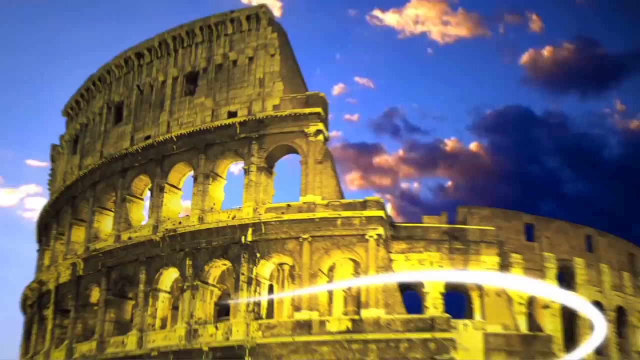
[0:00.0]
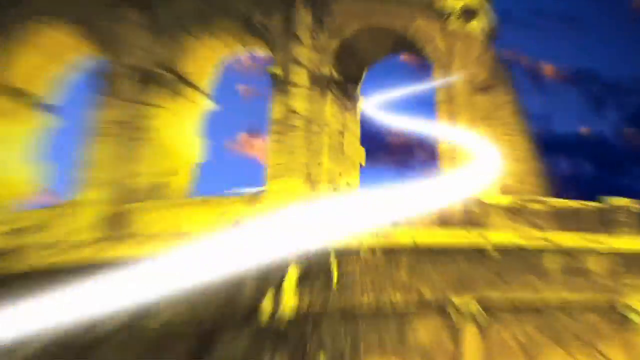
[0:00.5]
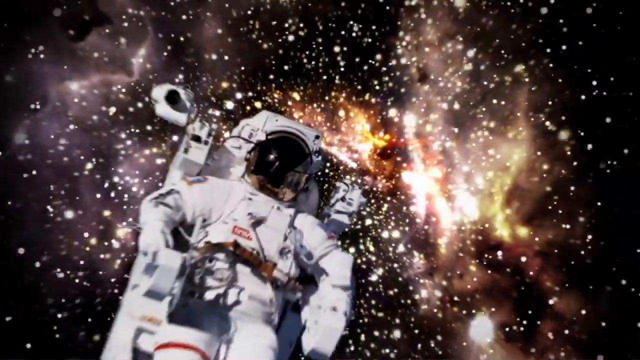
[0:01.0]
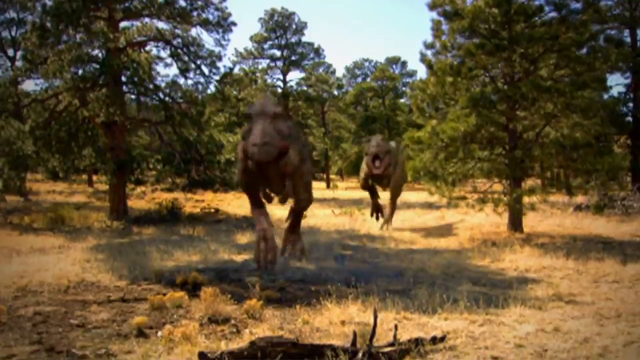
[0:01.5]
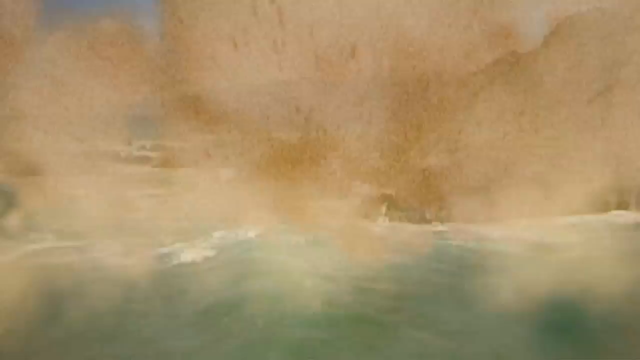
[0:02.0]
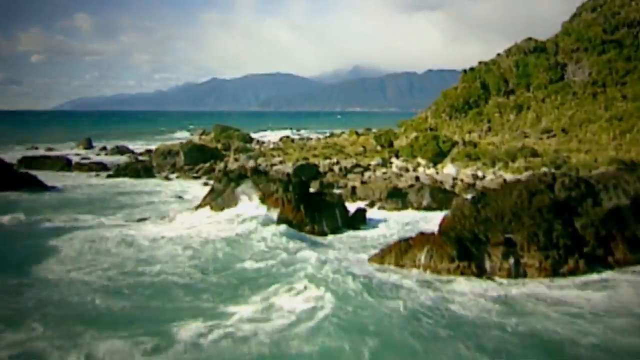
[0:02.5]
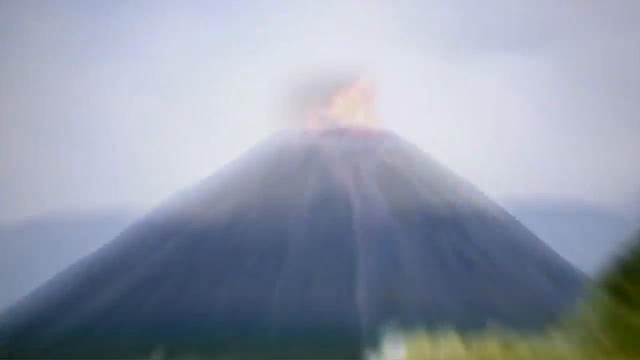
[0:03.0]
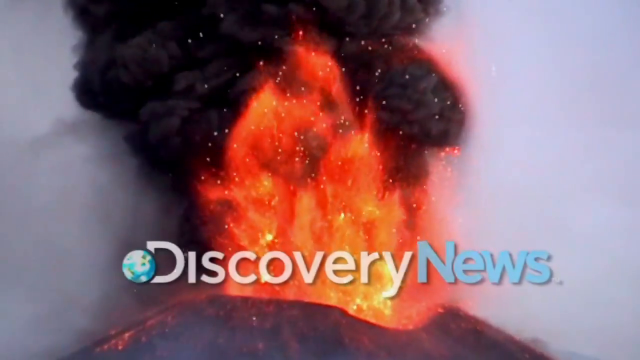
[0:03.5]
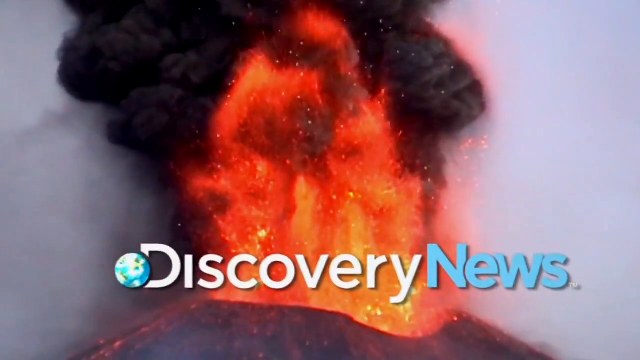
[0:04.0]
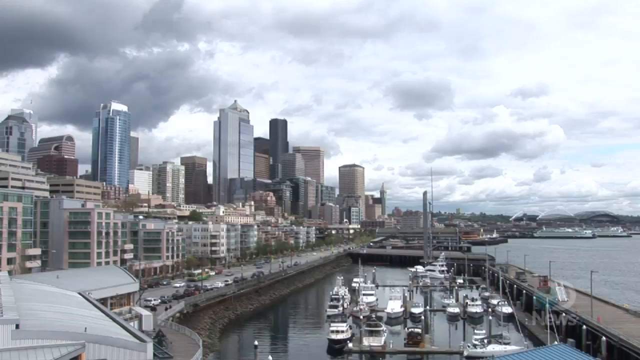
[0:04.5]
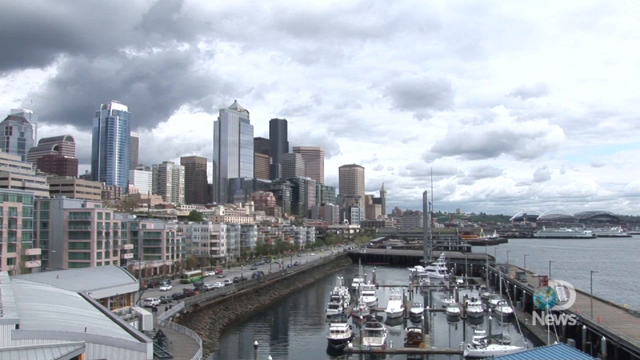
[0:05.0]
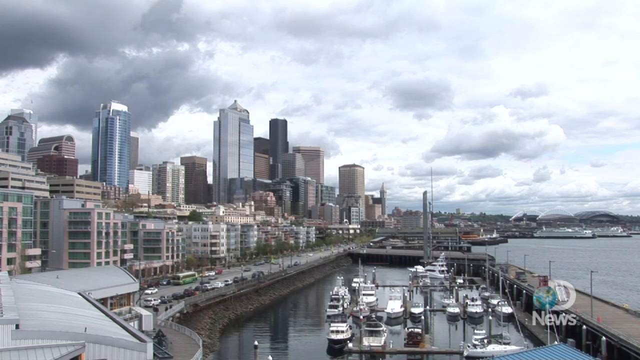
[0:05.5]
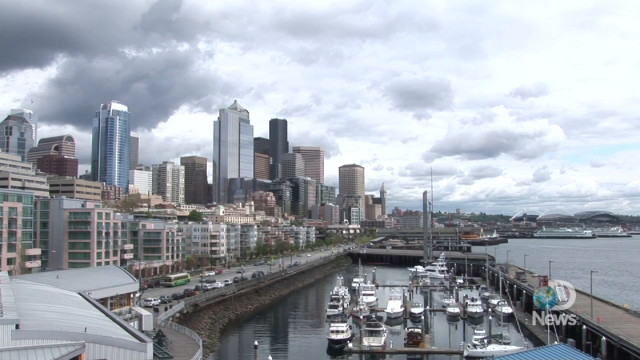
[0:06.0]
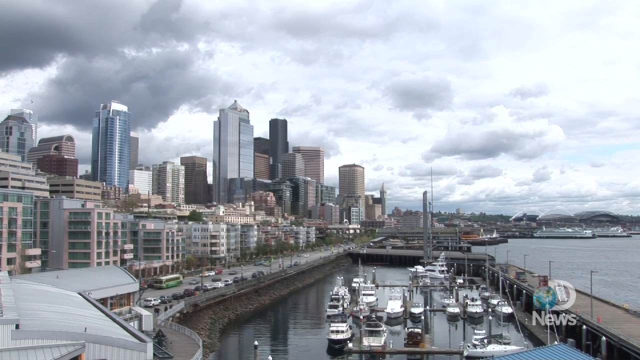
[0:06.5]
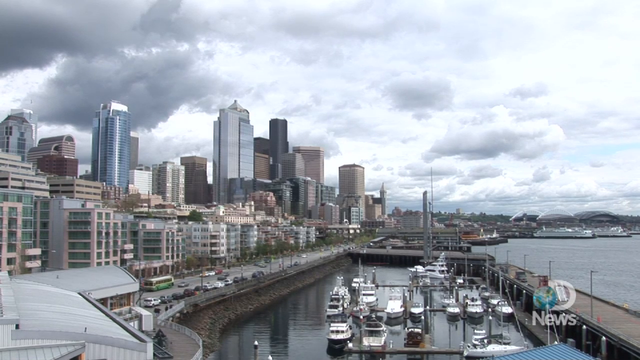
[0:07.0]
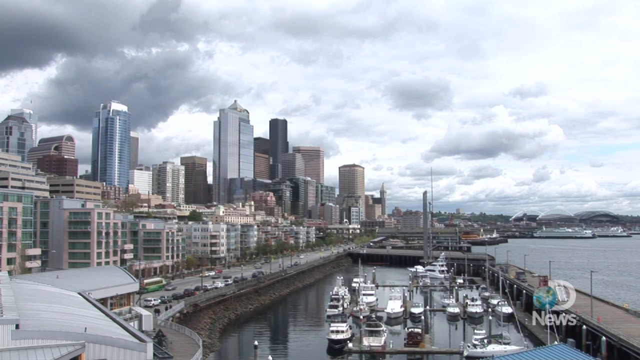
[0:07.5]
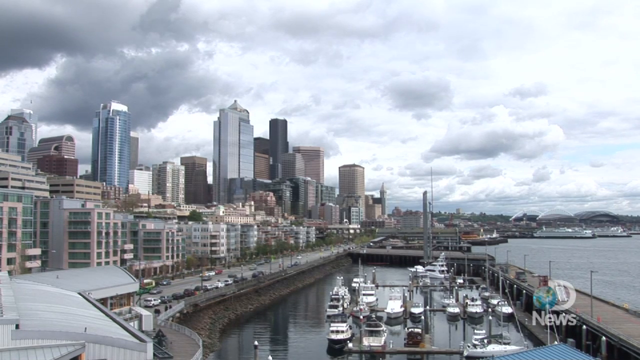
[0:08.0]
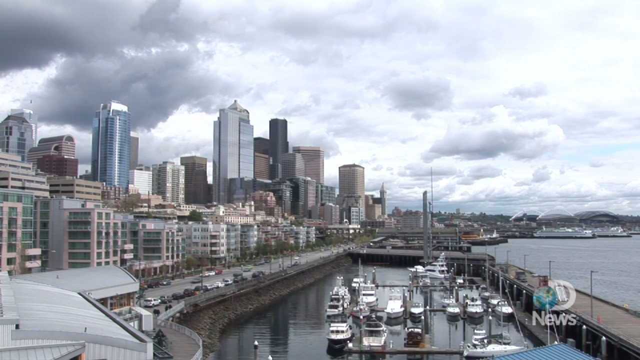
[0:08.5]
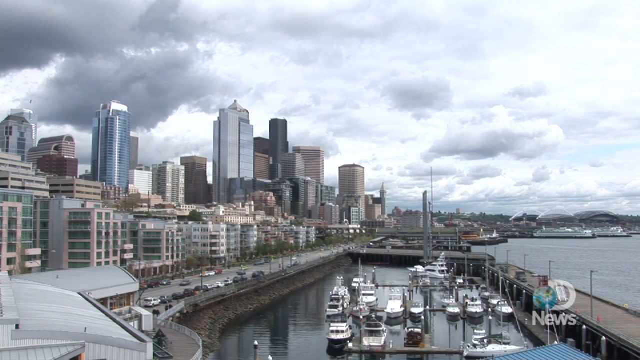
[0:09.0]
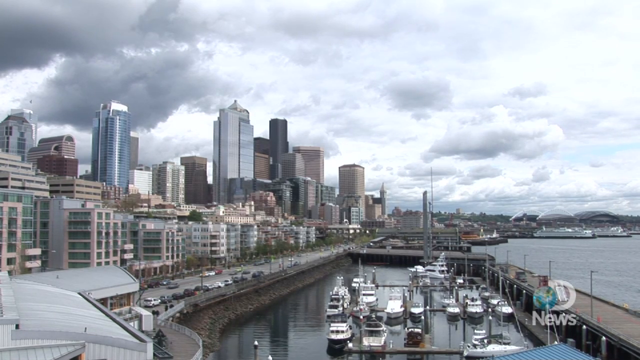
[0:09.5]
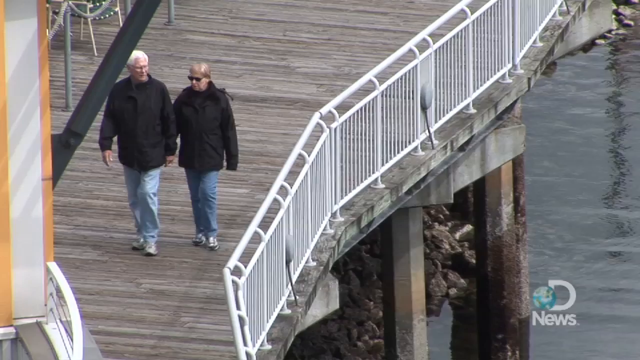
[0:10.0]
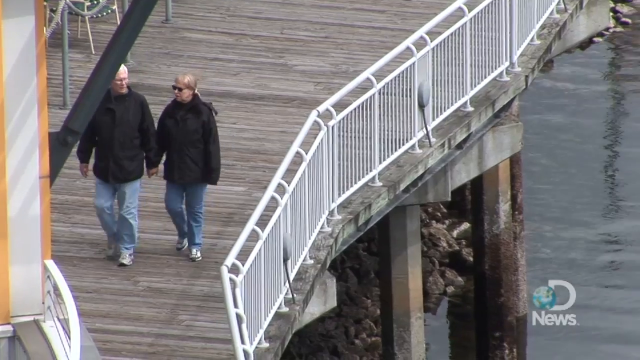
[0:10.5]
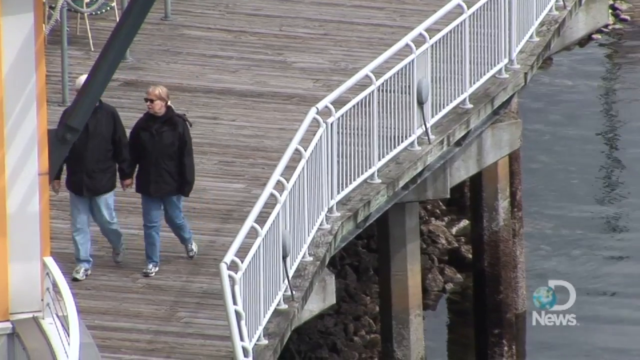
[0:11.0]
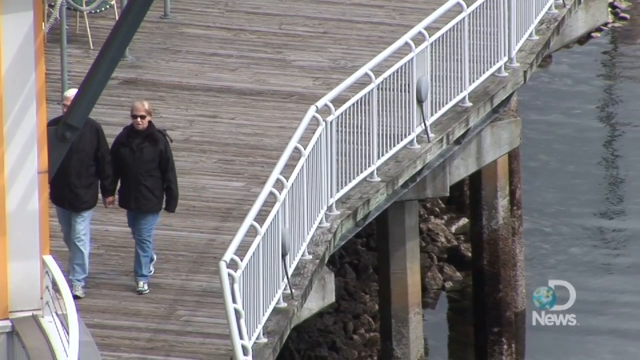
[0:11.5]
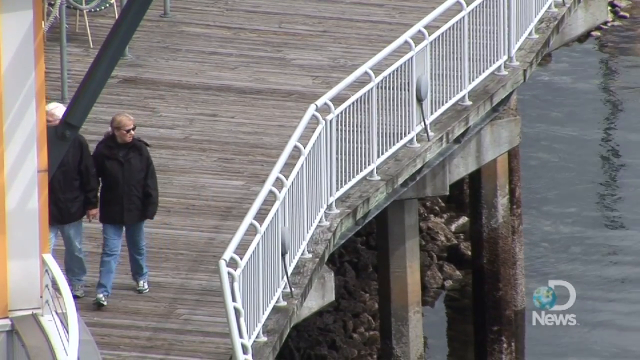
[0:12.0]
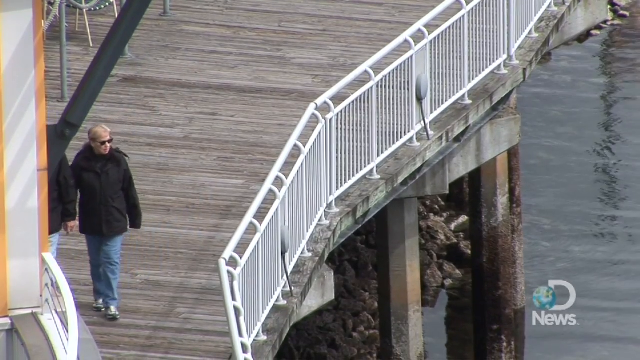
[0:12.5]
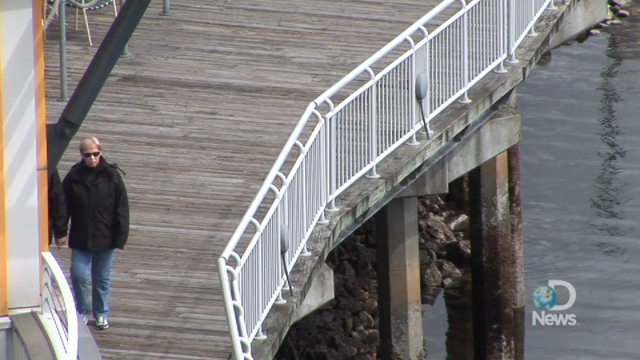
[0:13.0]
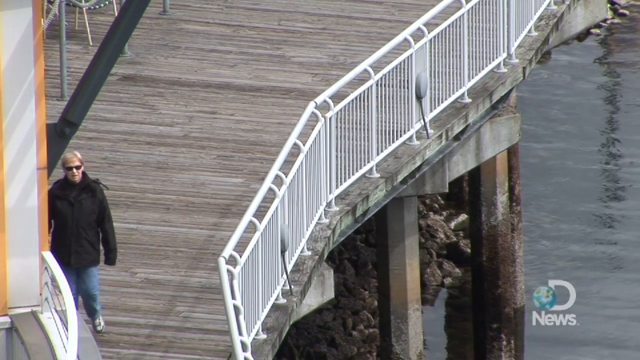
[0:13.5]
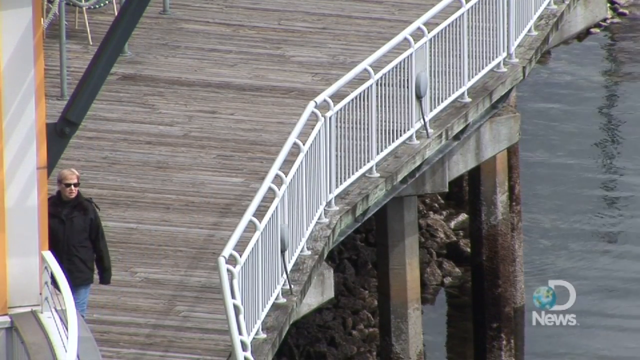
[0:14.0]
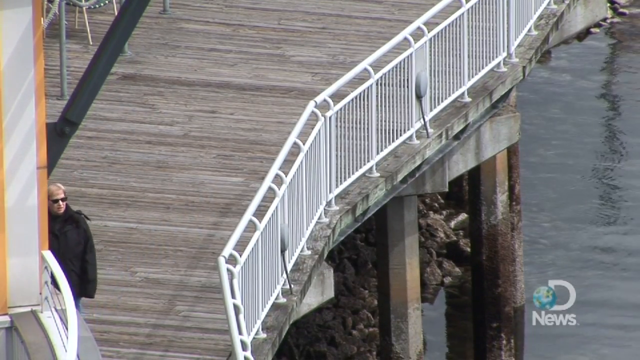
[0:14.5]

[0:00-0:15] The video is about a possible Pacific Northwest megaquake. A professor is shown talking. An animation by the United States Geological Survey shows the fault line underneath the surface as a 3D model. Another man, apparently a professor or scientist of some type, also talks. The video shows the coastline and the cities that would be affected, including the Alaska Way viaduct, in what is apparently Seattle. A simulation shows a lot of traffic in a heavily populated area, and an animated version shows what would happen to the highway infrastructure if the earthquake occurred, with a lot of devastation. The professor appears on screen again. Many different coastline areas are shown. The video is from Discovery News.